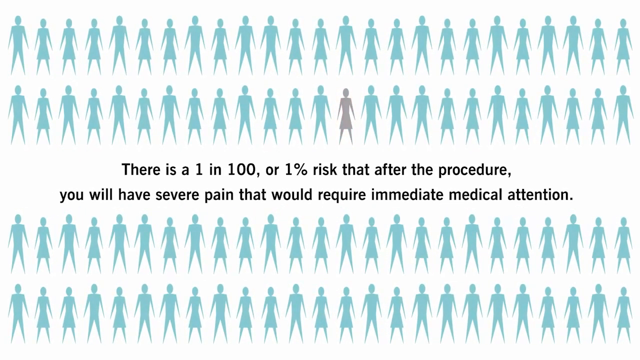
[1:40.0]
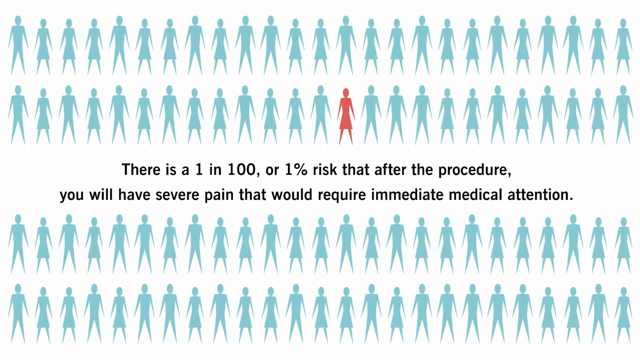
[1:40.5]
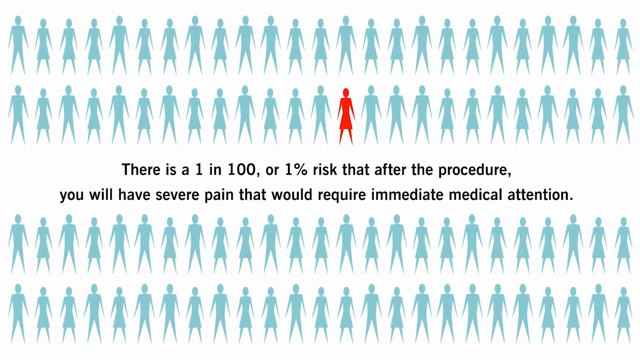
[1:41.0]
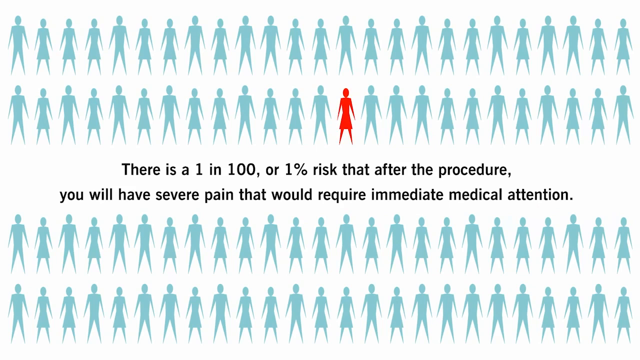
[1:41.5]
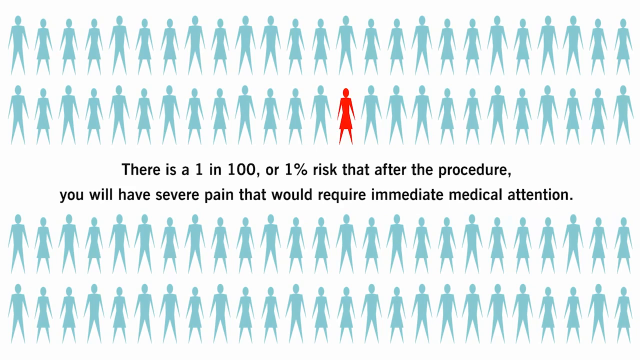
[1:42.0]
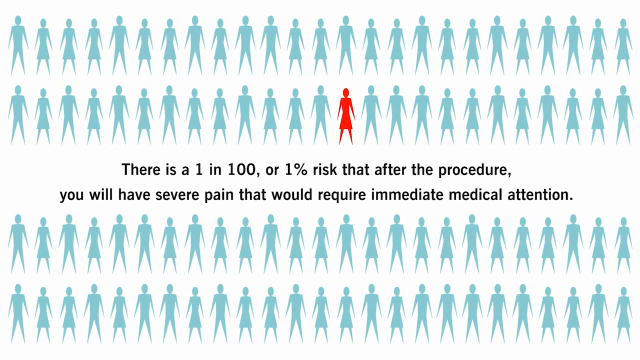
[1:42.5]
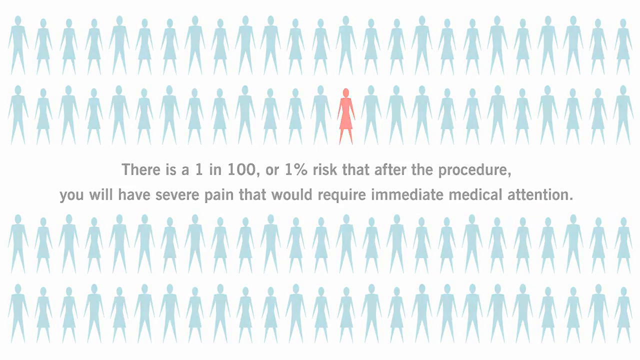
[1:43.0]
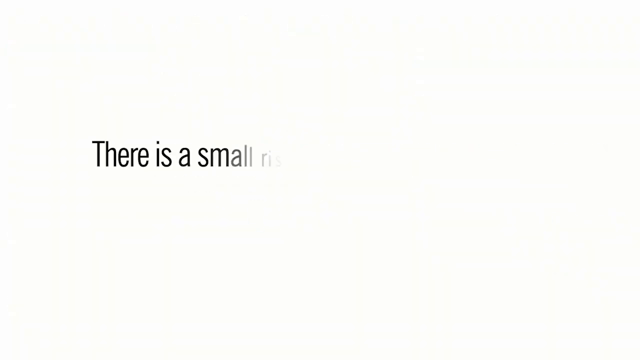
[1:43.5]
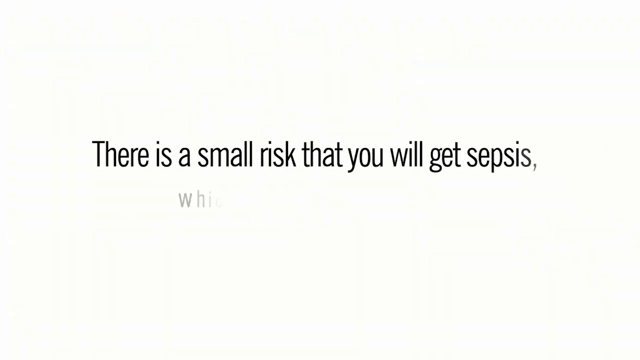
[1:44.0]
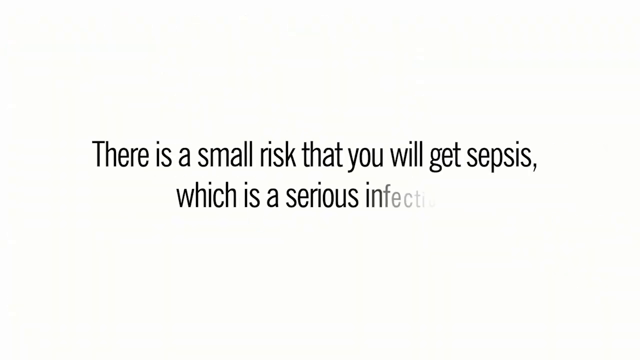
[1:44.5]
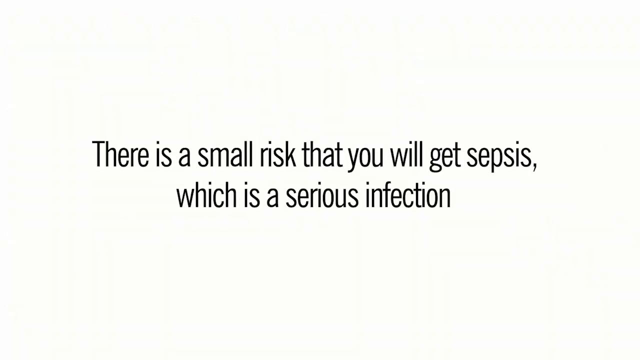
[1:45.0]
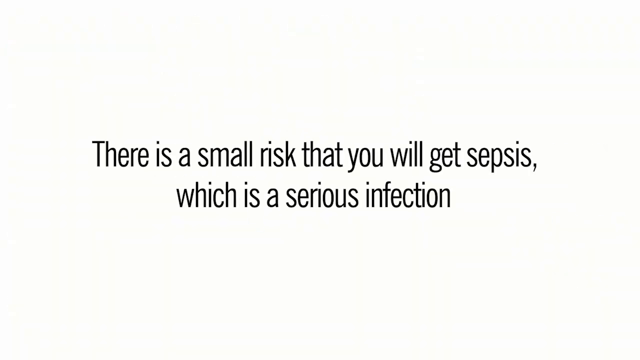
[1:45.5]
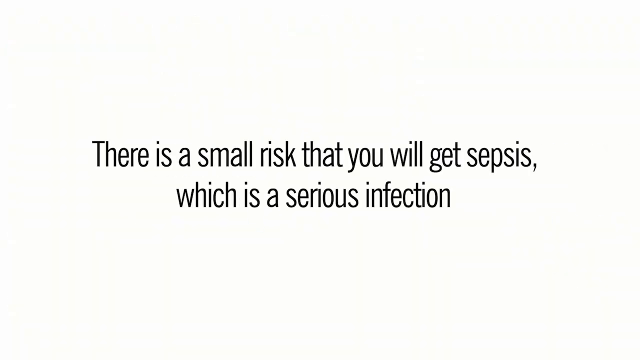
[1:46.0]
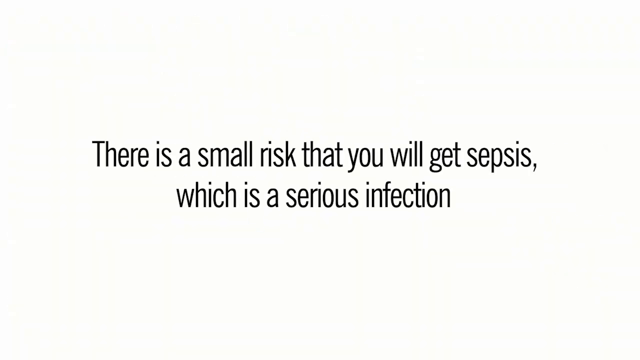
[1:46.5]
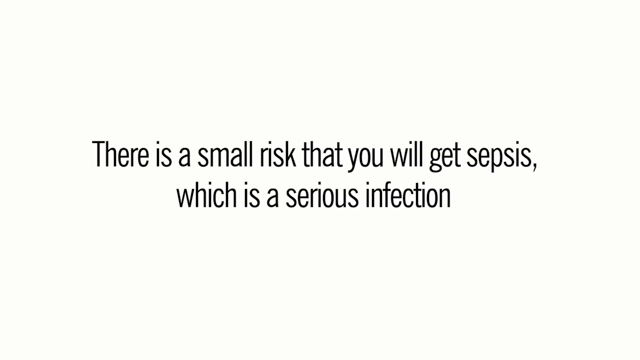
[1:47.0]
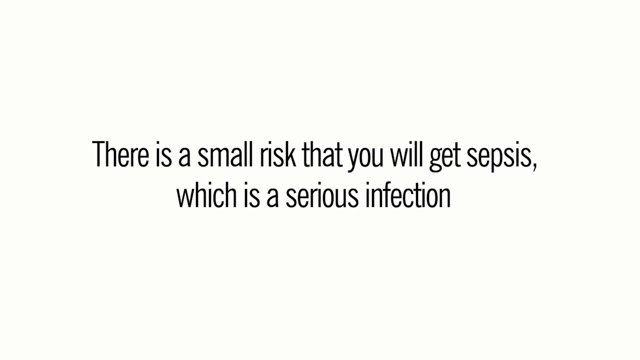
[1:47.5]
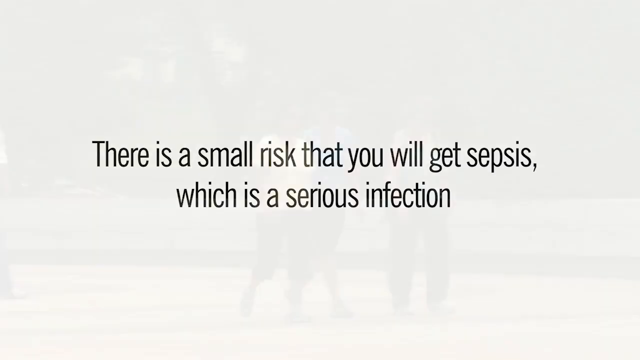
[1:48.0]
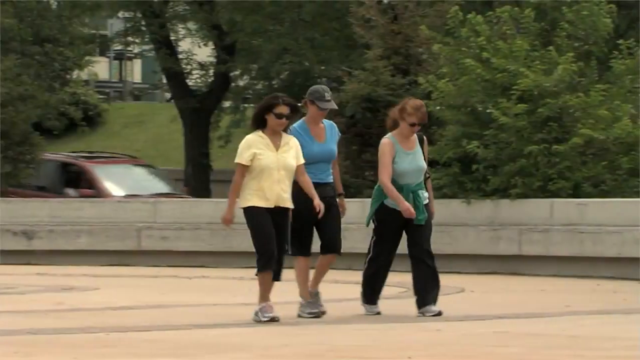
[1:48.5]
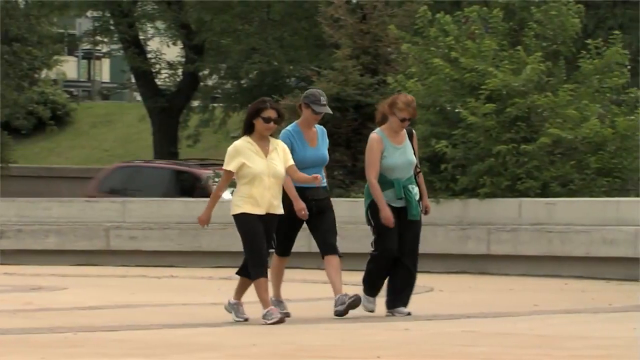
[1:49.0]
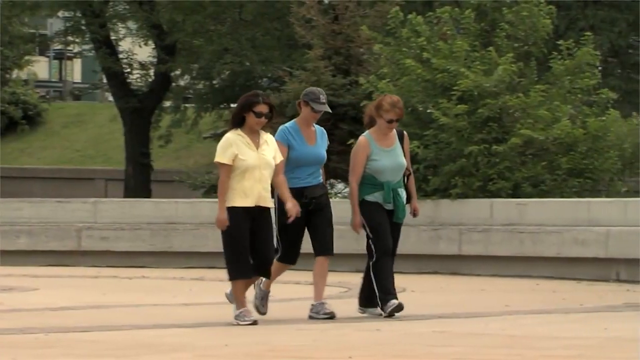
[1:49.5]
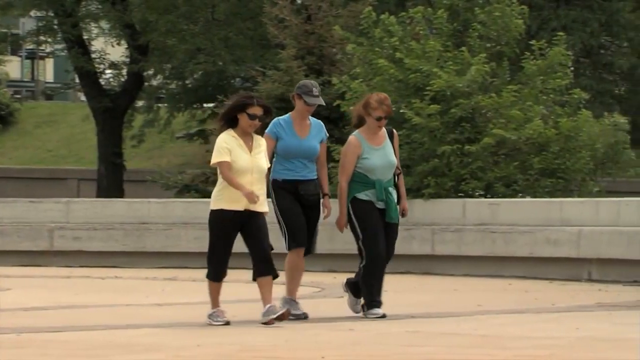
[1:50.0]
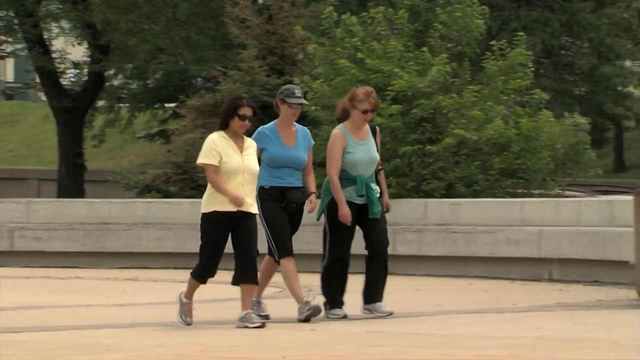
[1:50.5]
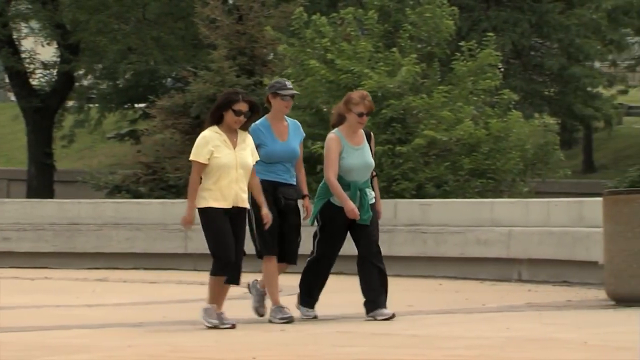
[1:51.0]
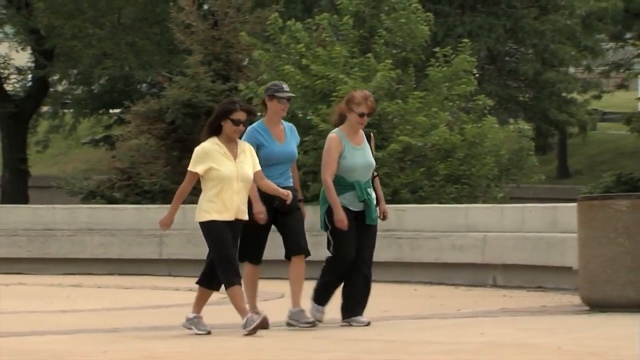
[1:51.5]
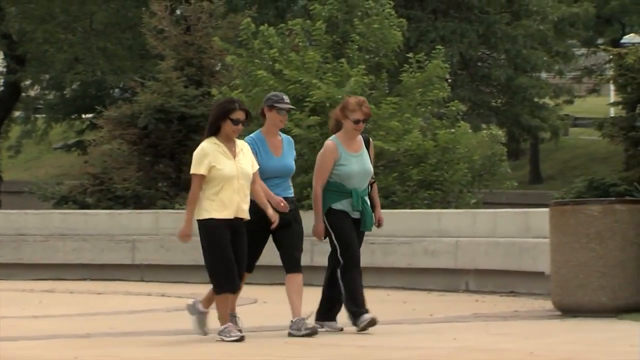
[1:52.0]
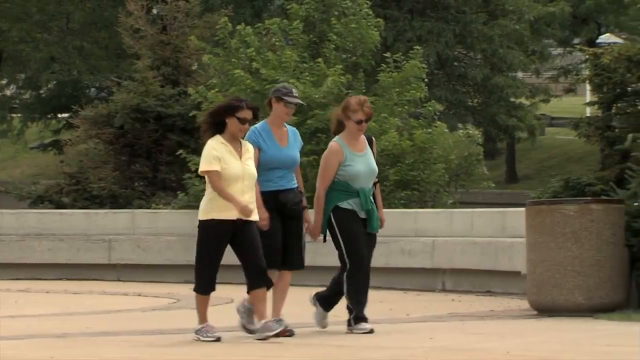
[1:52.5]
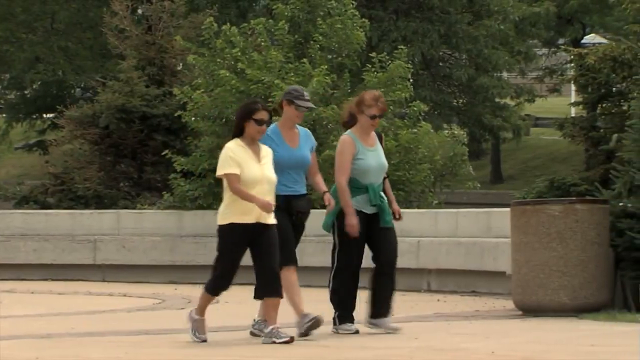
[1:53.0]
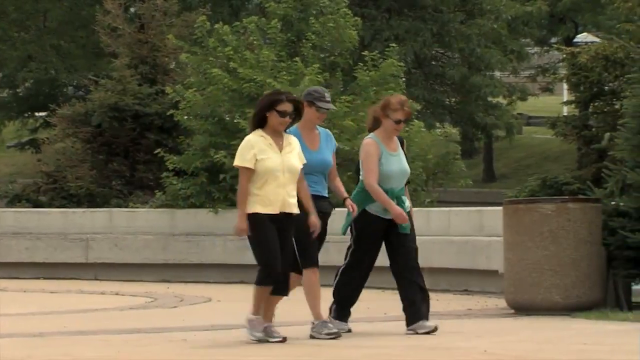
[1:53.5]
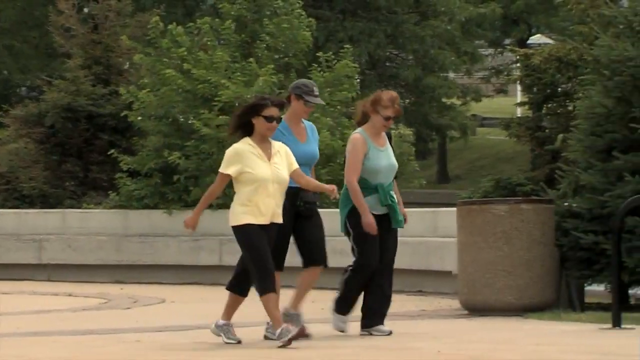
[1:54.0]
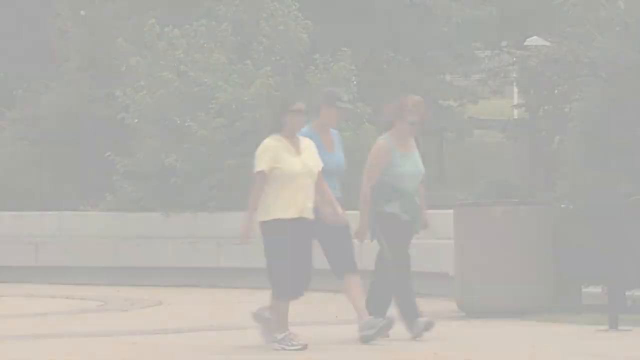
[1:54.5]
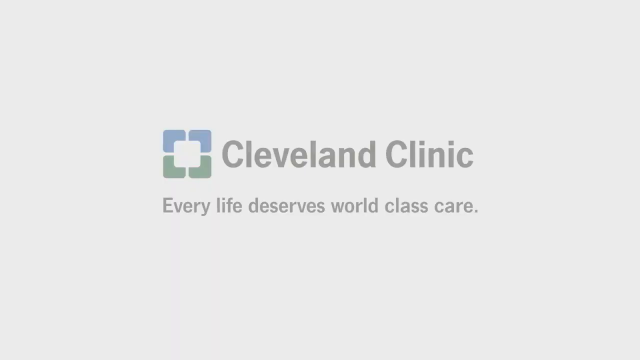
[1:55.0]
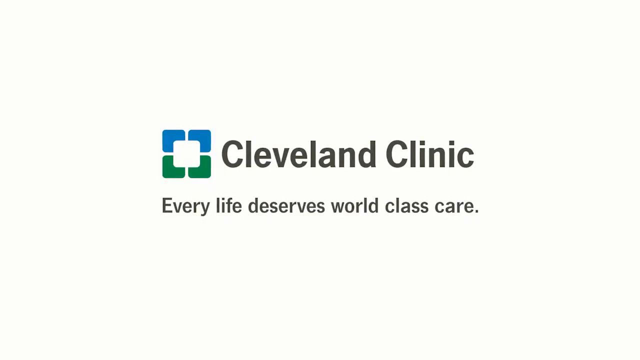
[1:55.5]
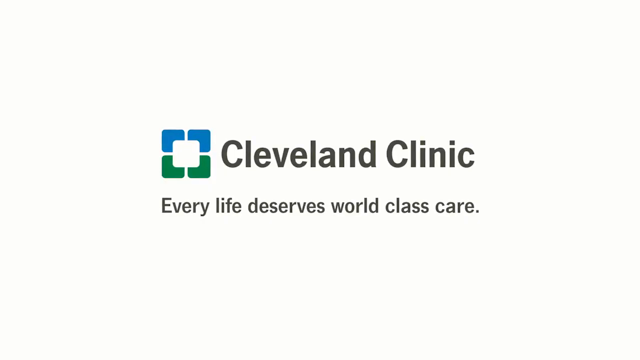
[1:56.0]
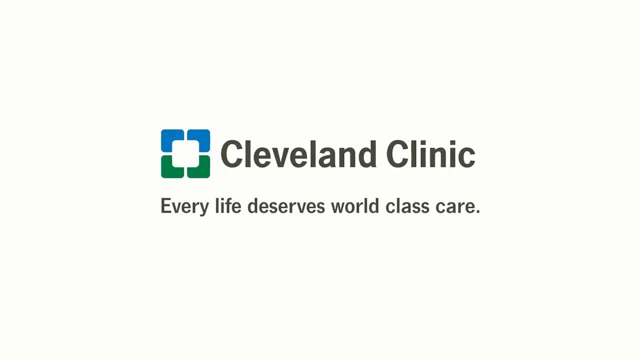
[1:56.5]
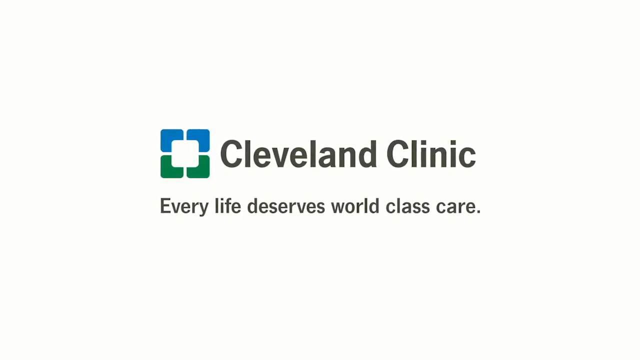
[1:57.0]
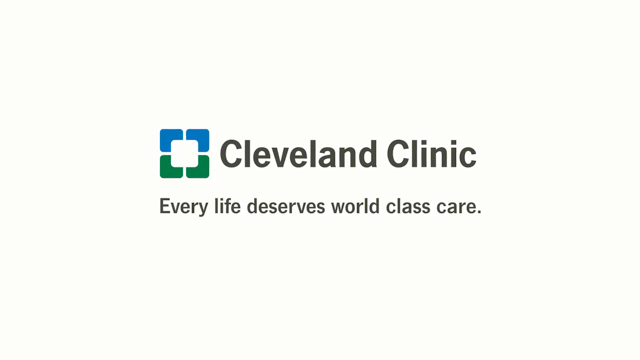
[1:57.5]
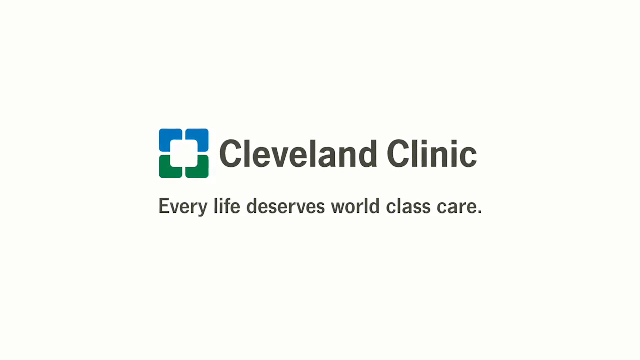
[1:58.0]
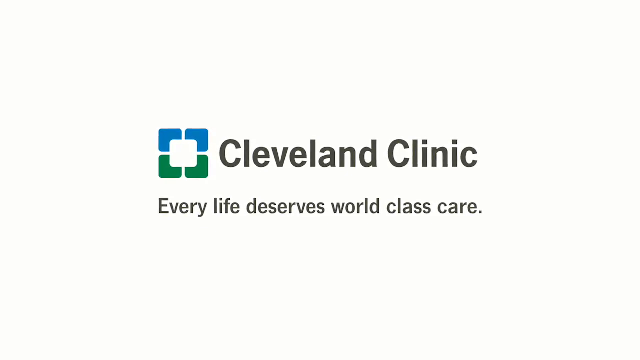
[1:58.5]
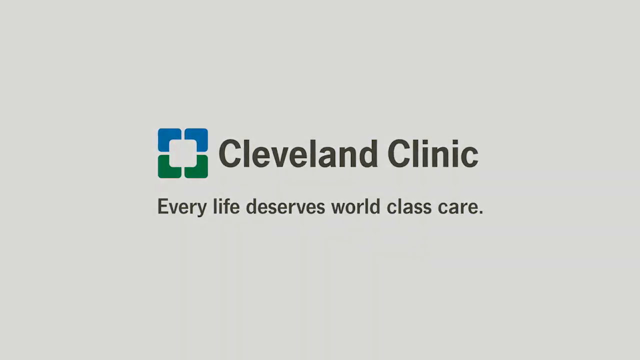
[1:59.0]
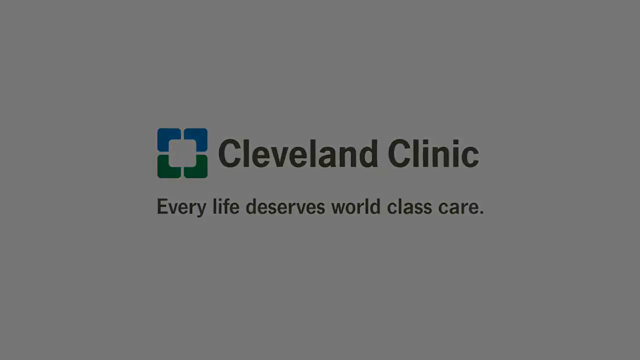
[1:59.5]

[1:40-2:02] Text in the center of the screen reads "there's a one in 100 or 1% risk that after the procedure, you will have severe pain that will require immediate medical attention," with rows of human forms at the top and bottom of the screen: the one in 100 people at risk is shown in gray and the rest in blue. Next, text in the middle of the screen on a white background reads "there's a small risk that you will get sepsis, which is a serious infection." Then three women walk outside on a sidewalk. The woman on the far left wears a yellow V-neck t-shirt, black capris and sunglasses; the woman in the middle wears a turquoise t-shirt, black capris and a baseball cap; and the woman on the right wears a sage green tank top, green long pants and sunglasses.